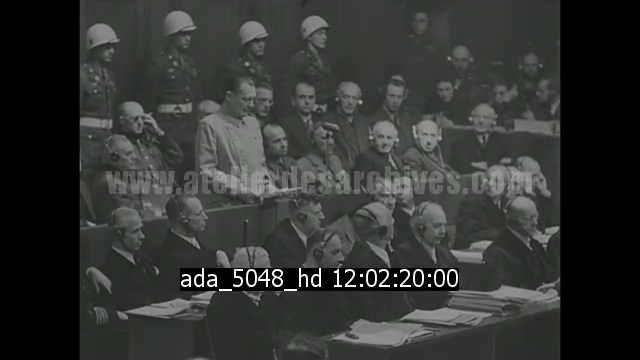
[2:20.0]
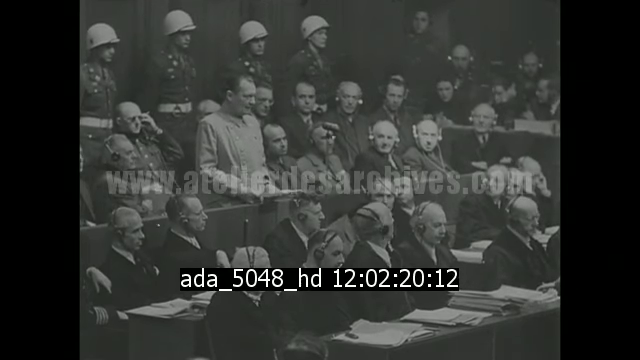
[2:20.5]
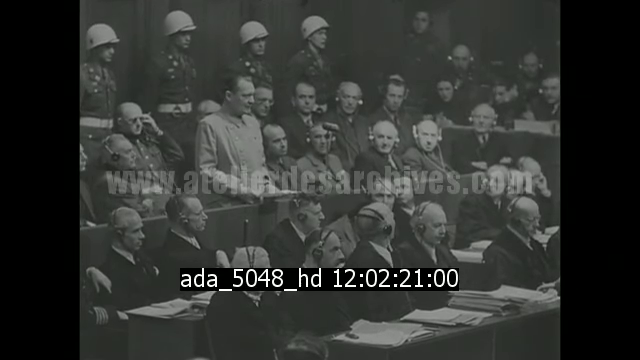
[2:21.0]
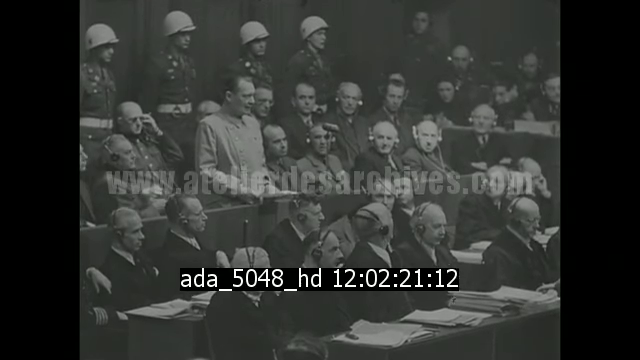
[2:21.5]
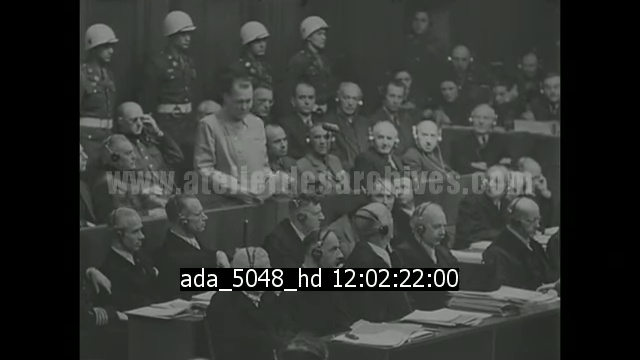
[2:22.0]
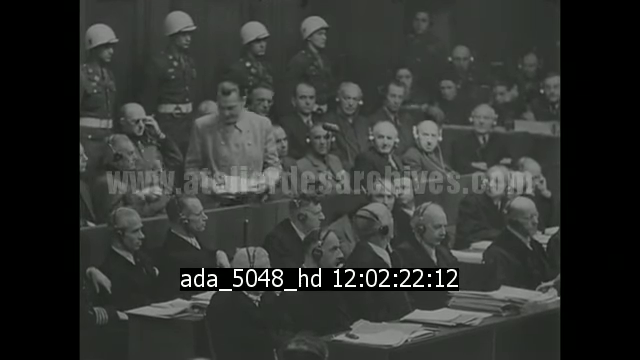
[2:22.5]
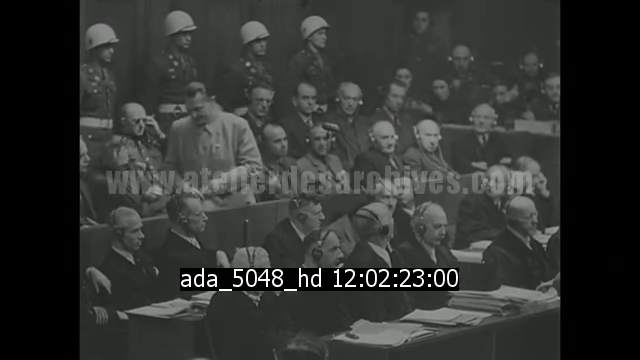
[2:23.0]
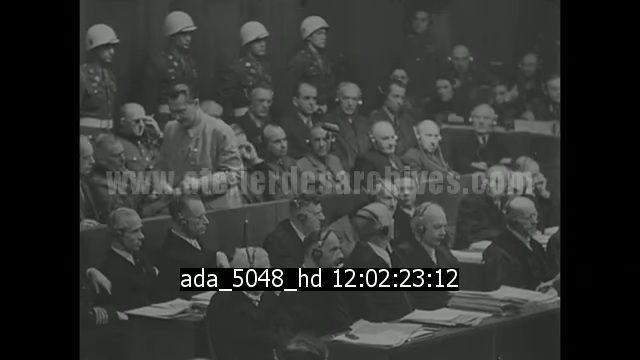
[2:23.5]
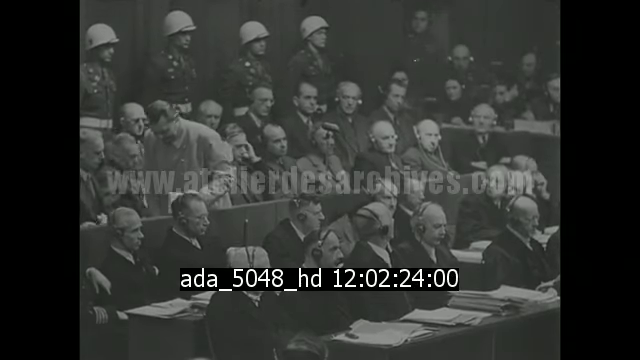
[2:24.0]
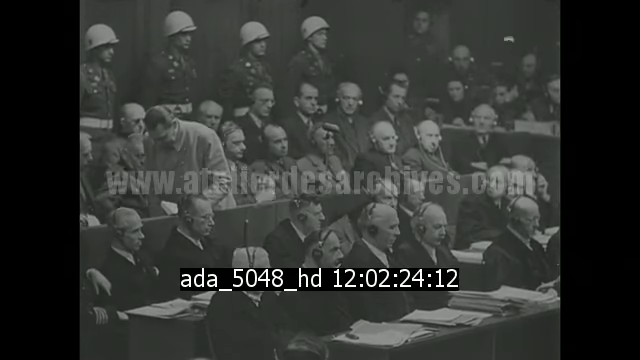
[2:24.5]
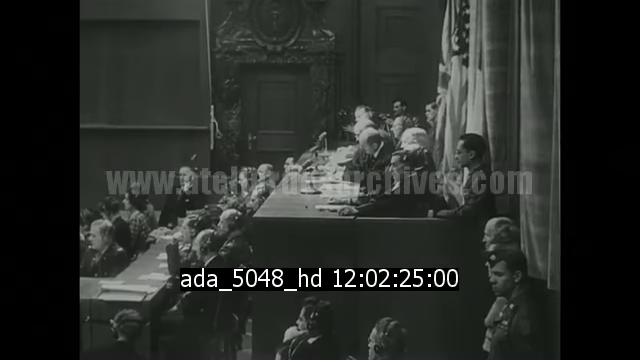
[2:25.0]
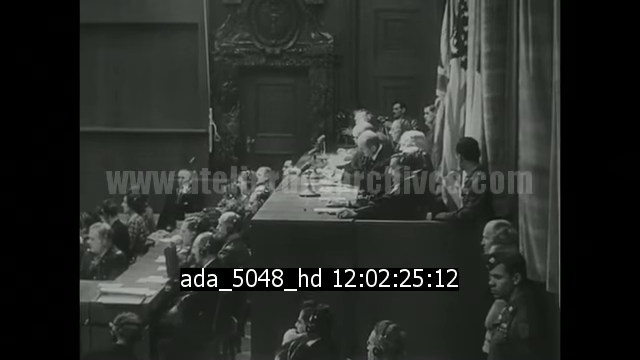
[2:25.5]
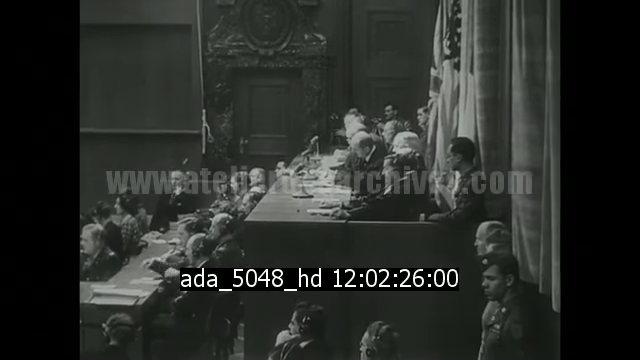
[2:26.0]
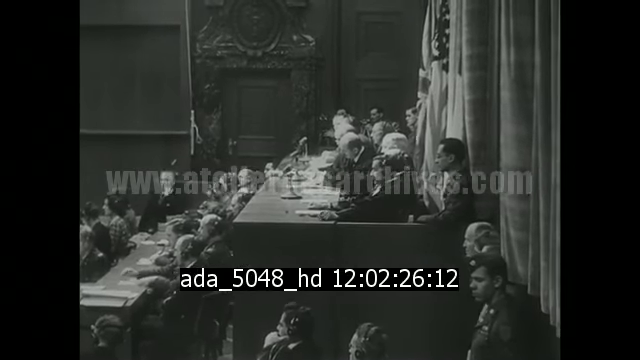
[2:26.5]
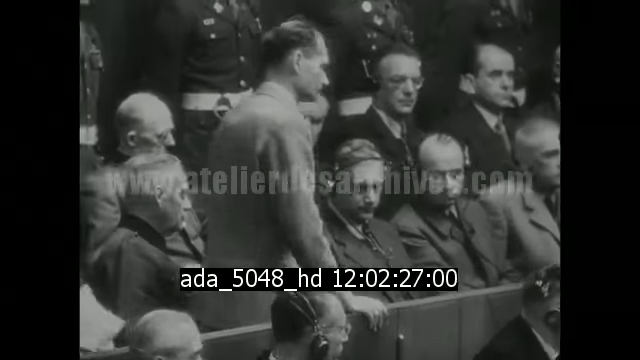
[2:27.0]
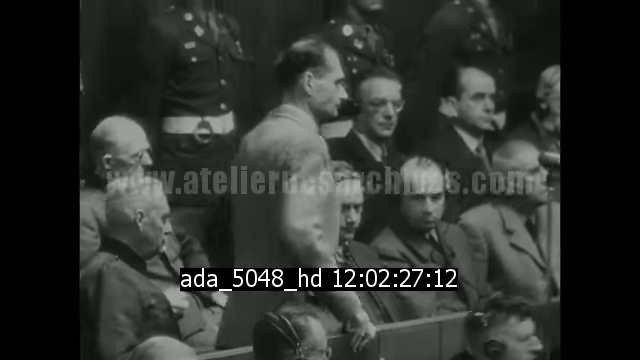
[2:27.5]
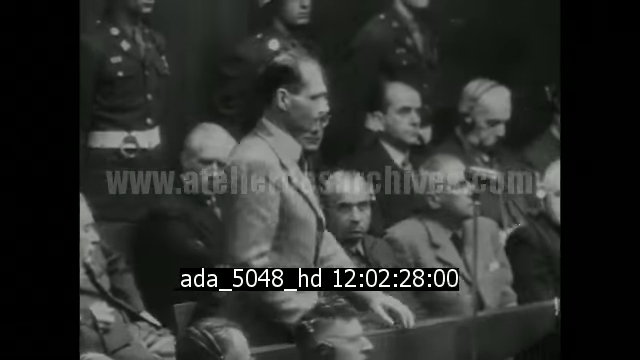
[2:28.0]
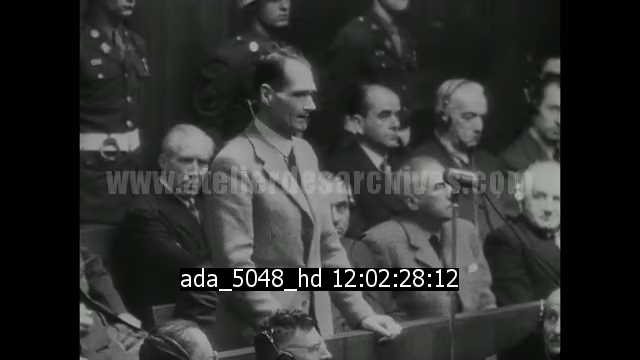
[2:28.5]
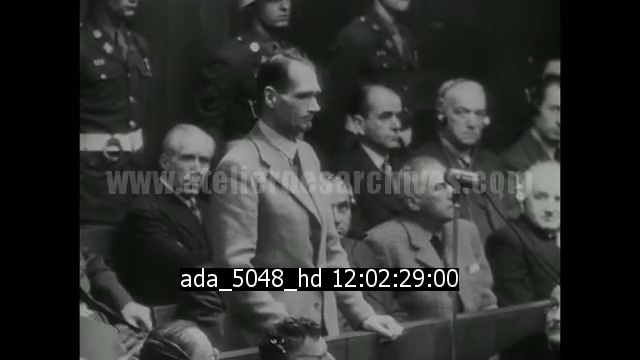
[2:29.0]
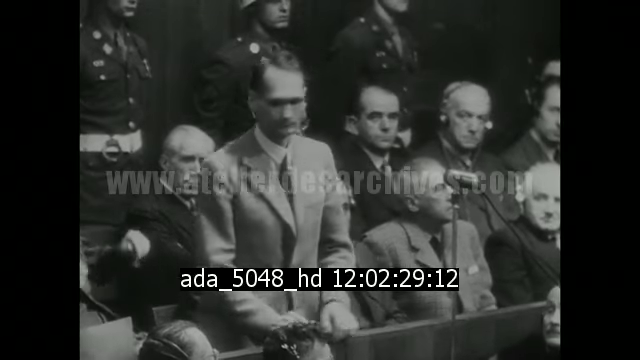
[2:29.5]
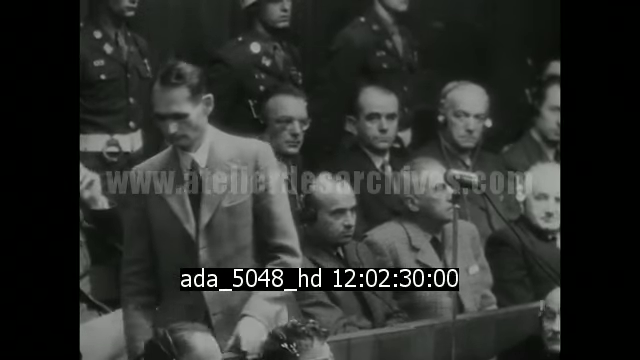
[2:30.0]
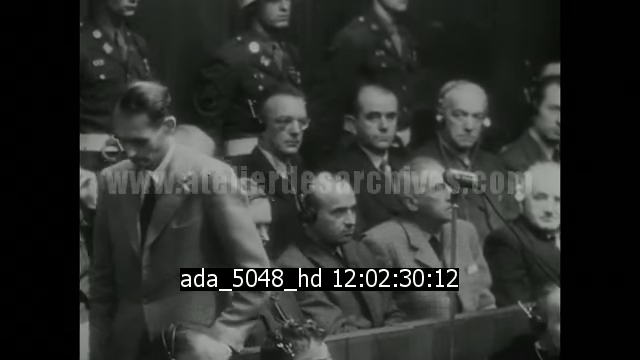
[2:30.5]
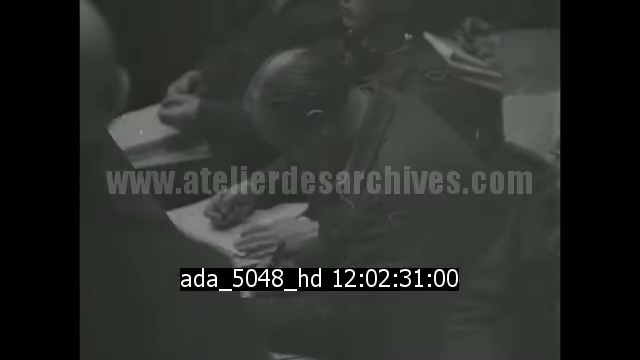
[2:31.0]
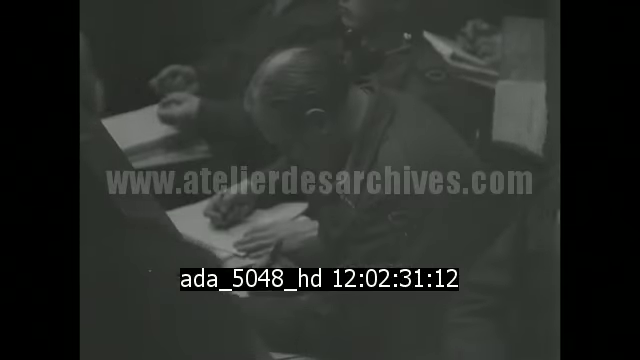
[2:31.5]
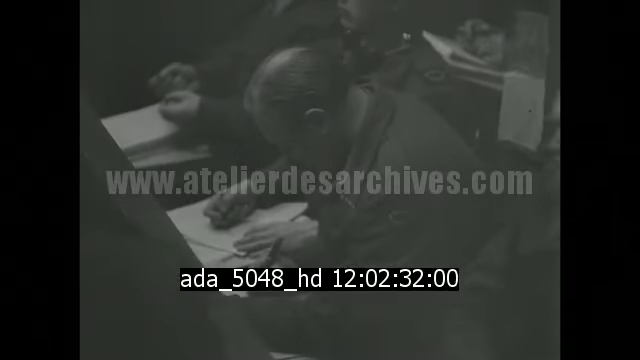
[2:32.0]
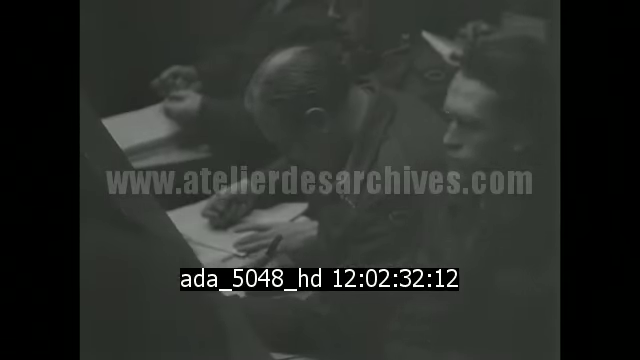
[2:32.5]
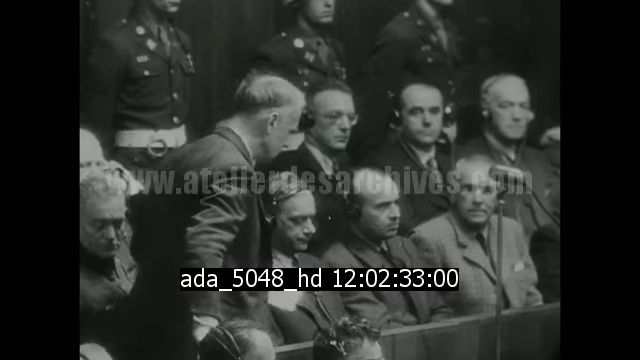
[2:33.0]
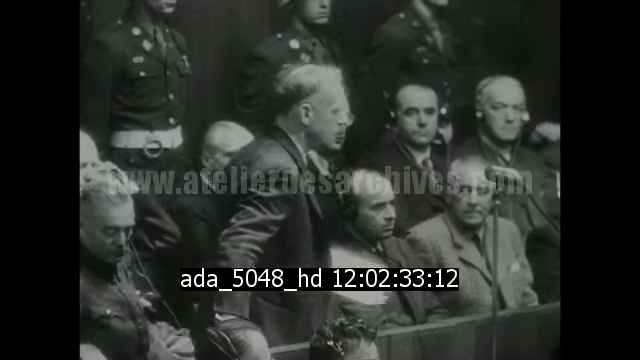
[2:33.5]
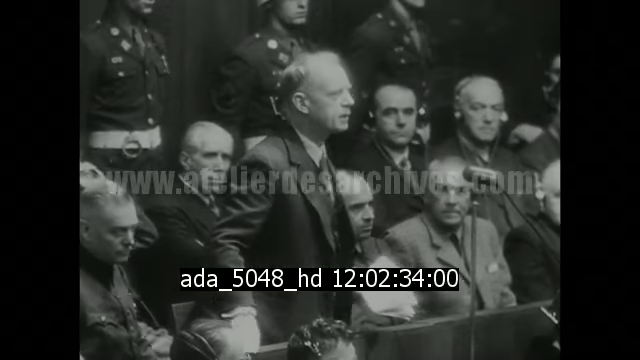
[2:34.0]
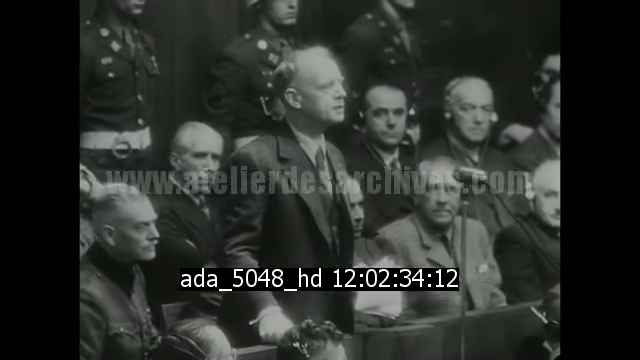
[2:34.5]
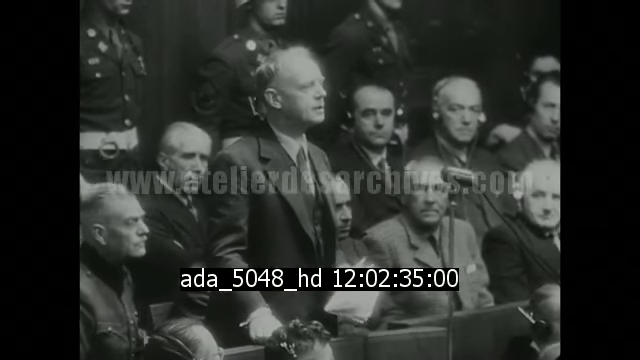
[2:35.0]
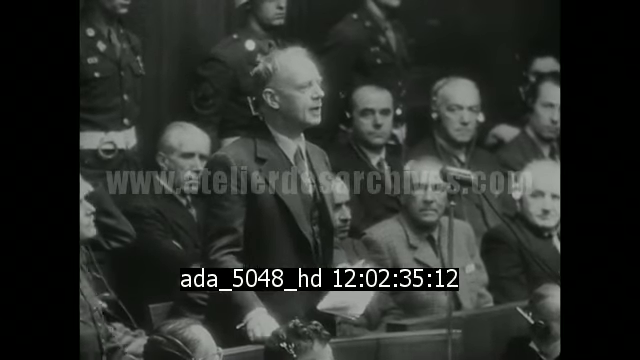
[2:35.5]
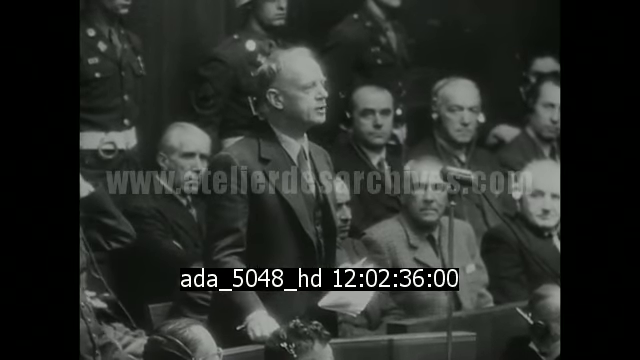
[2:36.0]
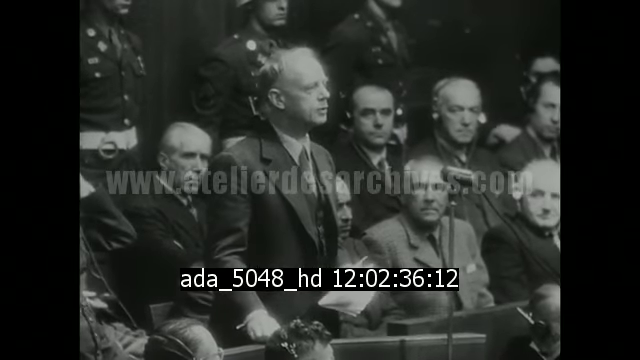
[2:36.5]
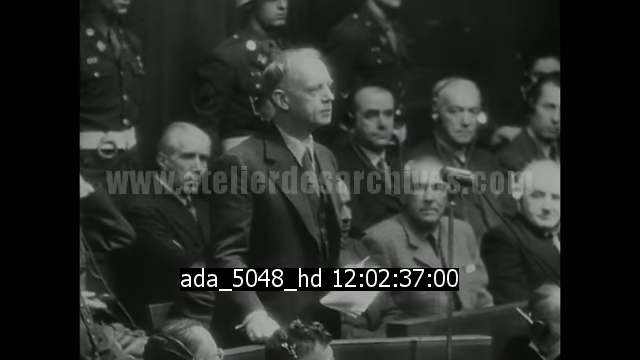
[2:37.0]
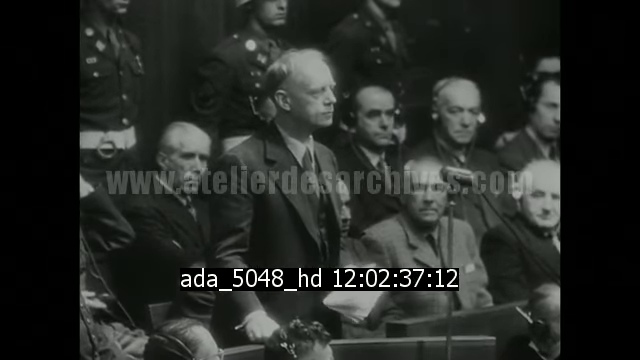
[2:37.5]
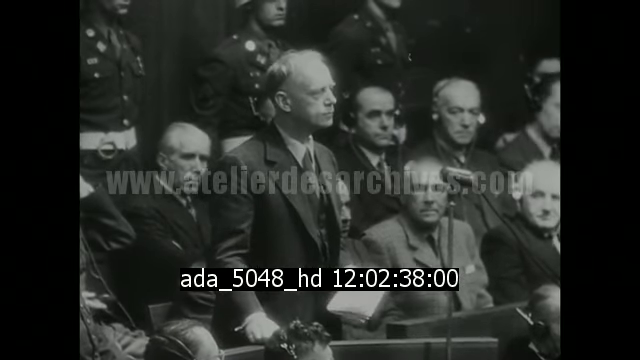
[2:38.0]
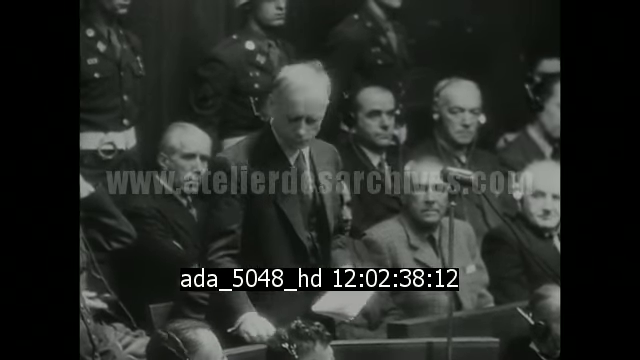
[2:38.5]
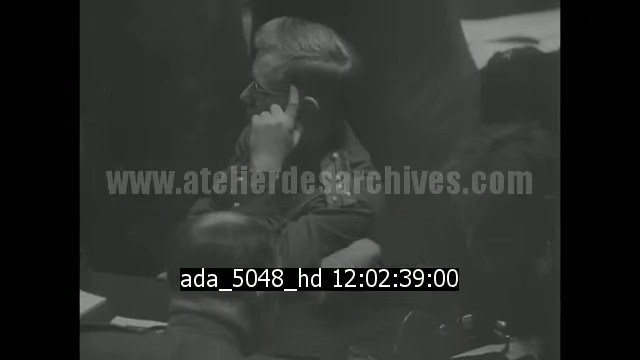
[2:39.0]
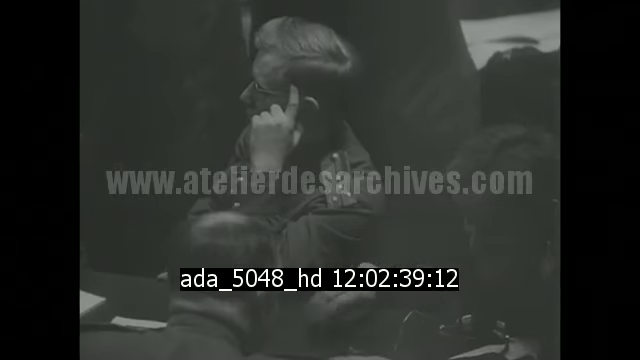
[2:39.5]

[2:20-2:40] Government officials hear testimony. American and British flags are in the background, and many soldiers are in the background of the scene. The footage is black and white, making the background hard to make out.